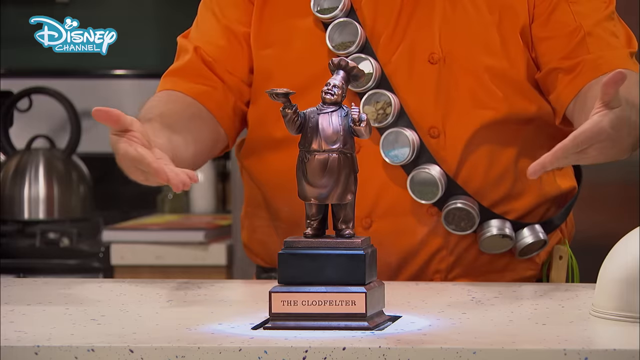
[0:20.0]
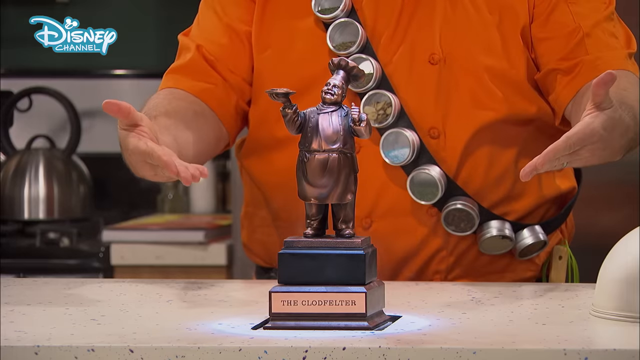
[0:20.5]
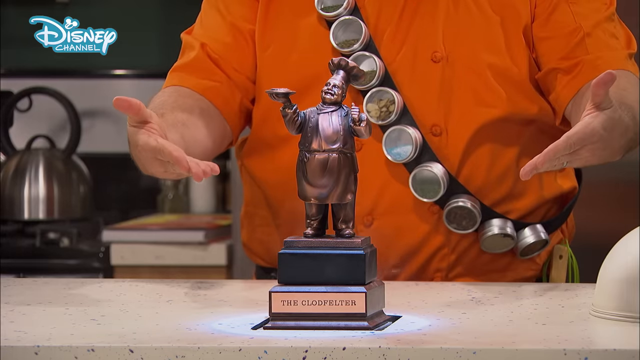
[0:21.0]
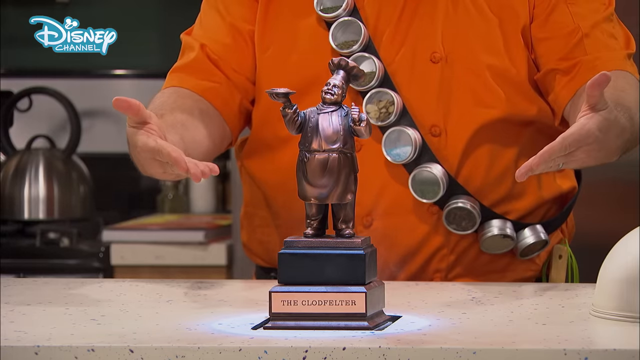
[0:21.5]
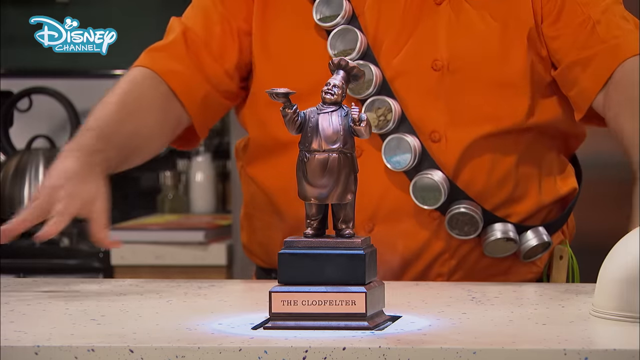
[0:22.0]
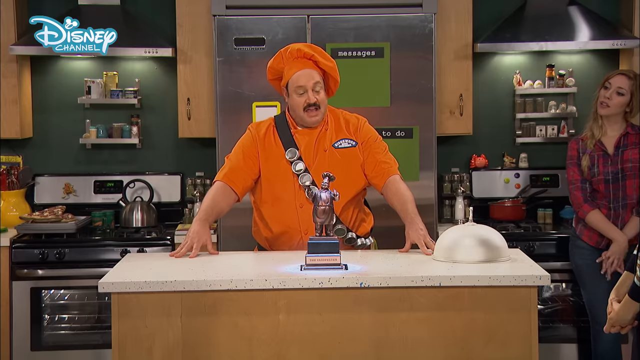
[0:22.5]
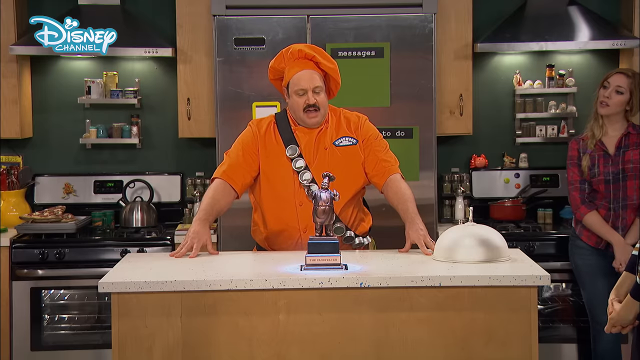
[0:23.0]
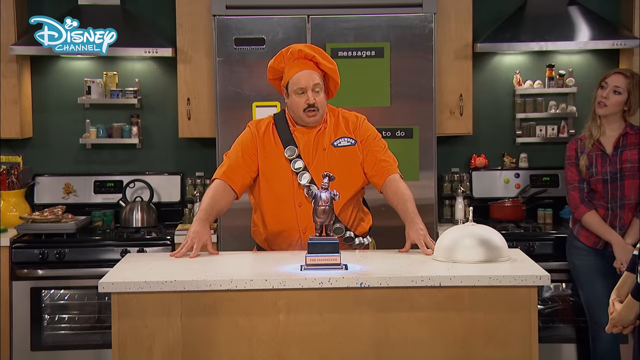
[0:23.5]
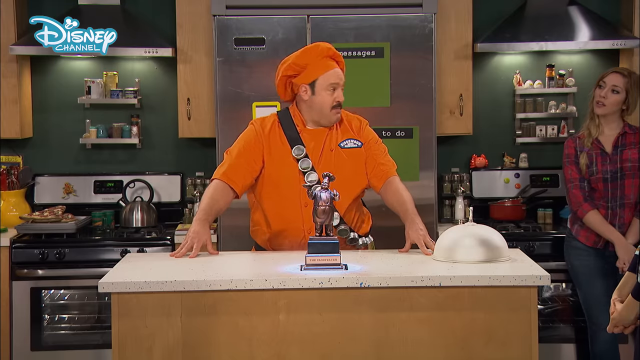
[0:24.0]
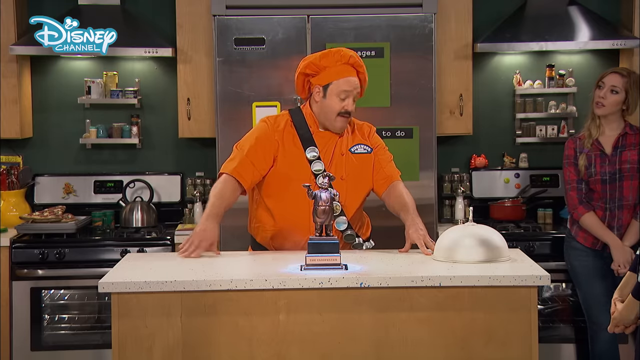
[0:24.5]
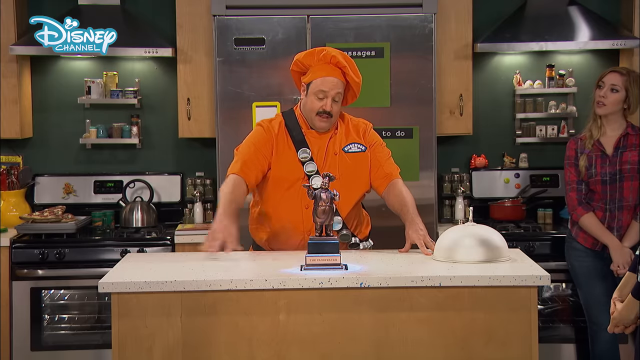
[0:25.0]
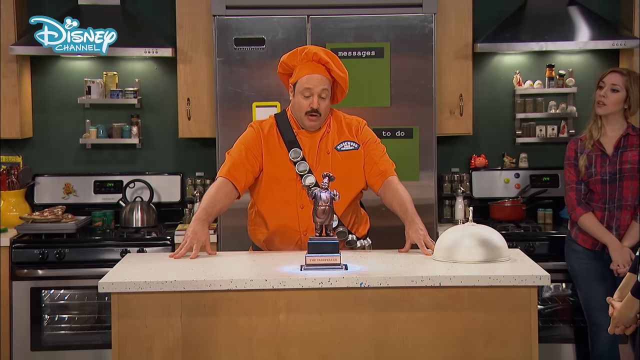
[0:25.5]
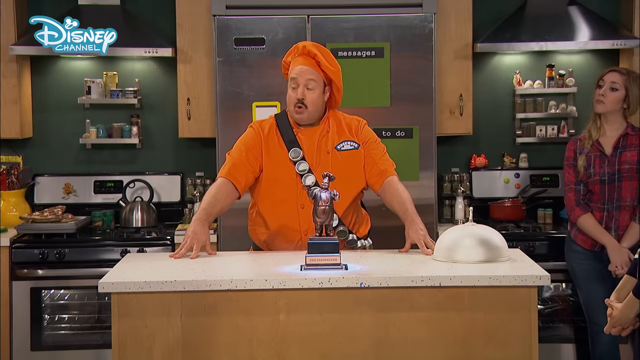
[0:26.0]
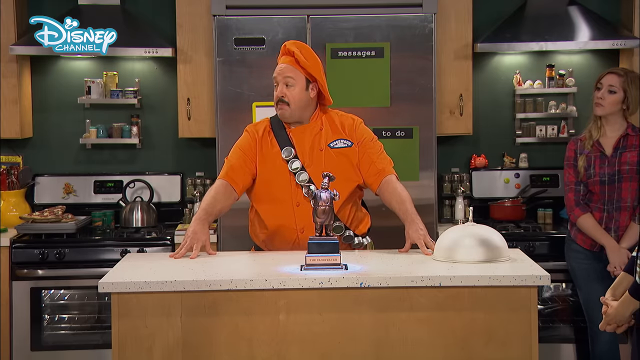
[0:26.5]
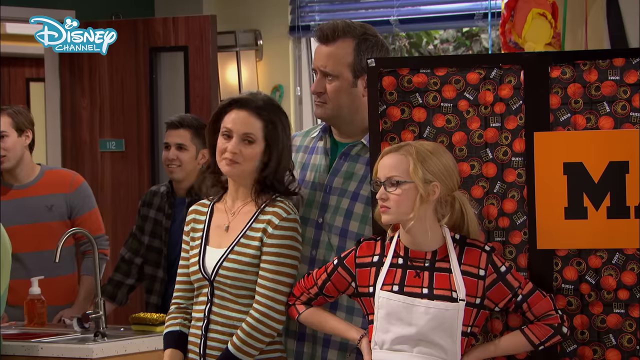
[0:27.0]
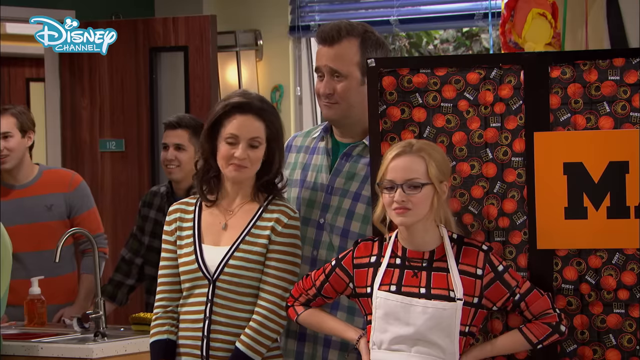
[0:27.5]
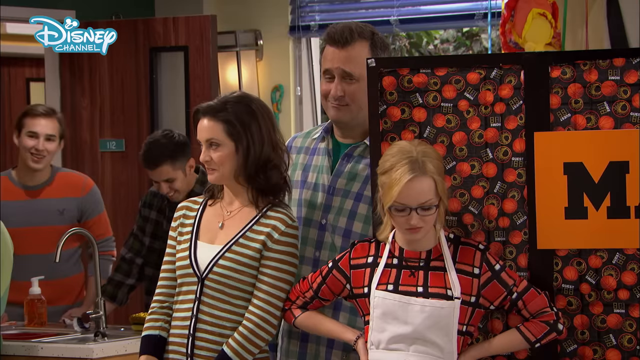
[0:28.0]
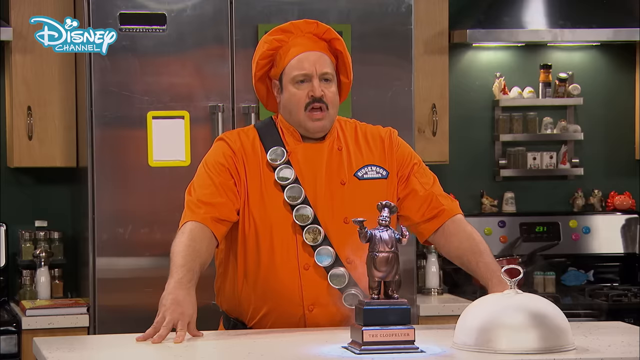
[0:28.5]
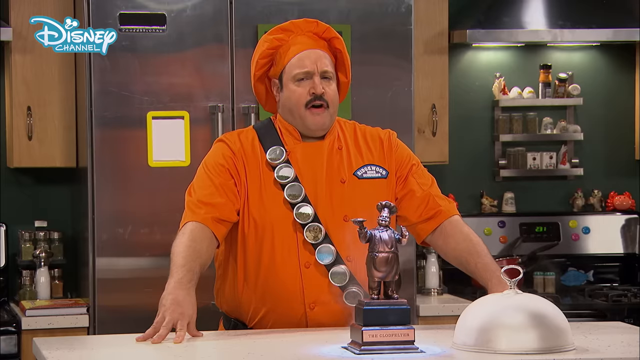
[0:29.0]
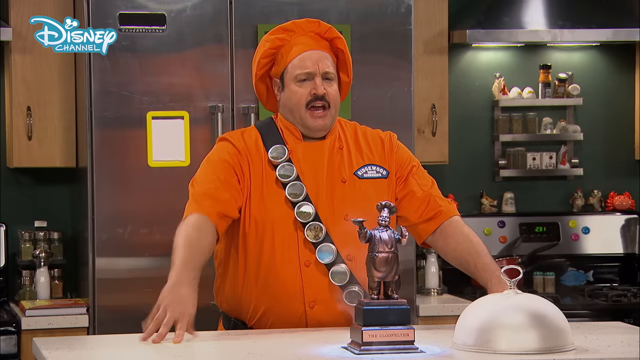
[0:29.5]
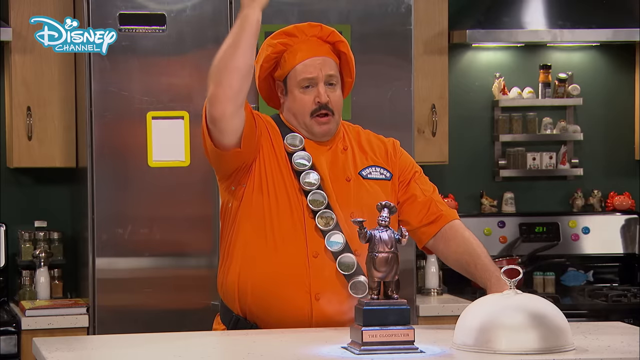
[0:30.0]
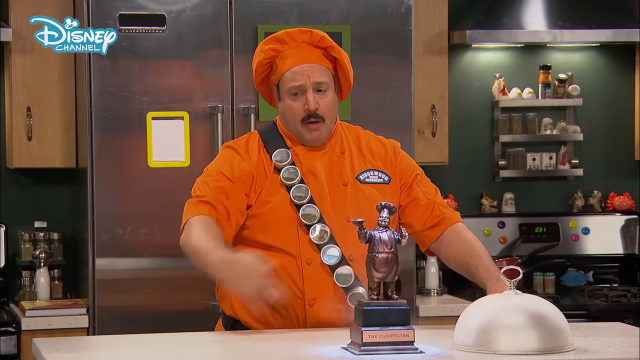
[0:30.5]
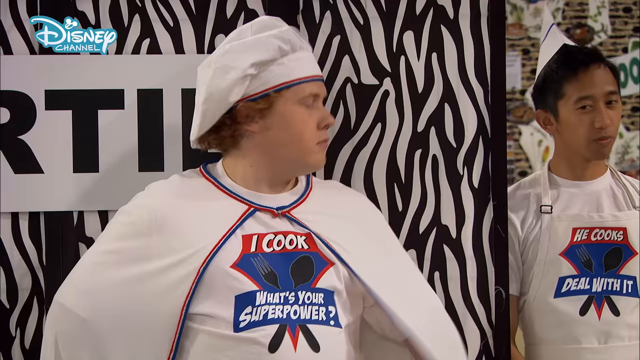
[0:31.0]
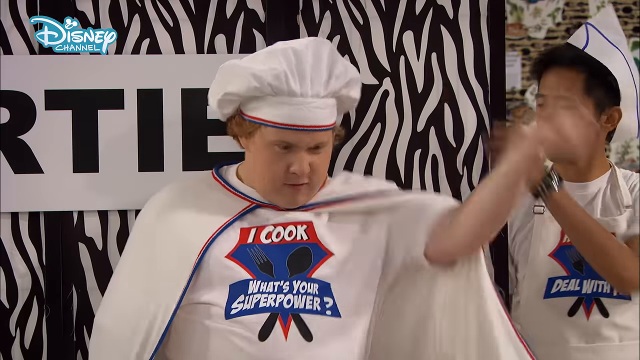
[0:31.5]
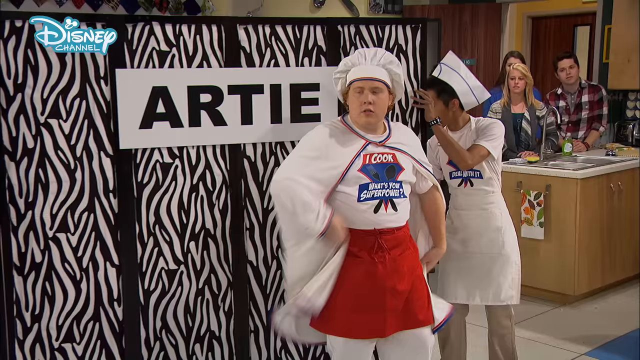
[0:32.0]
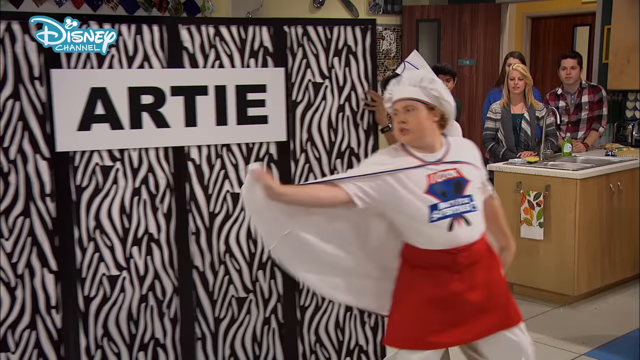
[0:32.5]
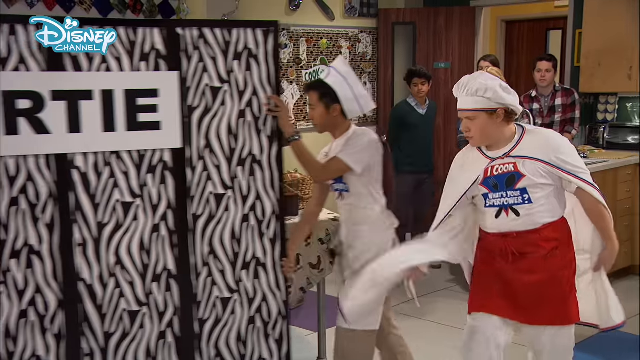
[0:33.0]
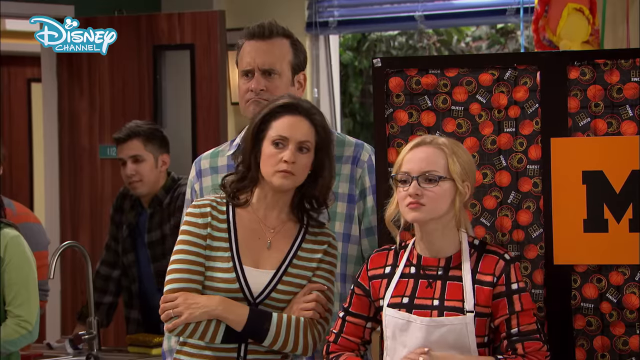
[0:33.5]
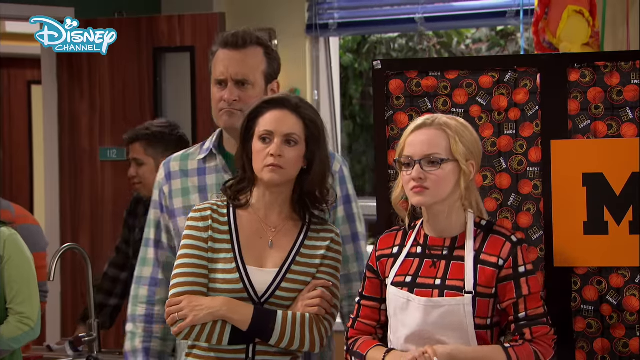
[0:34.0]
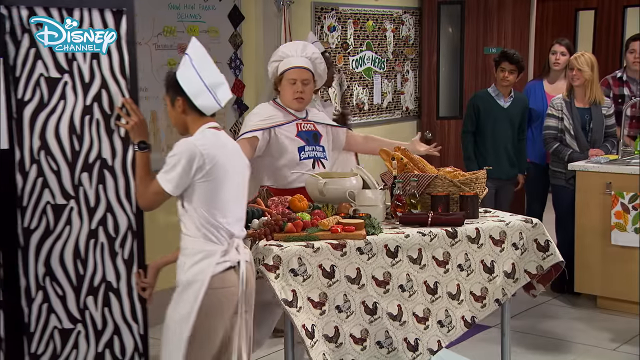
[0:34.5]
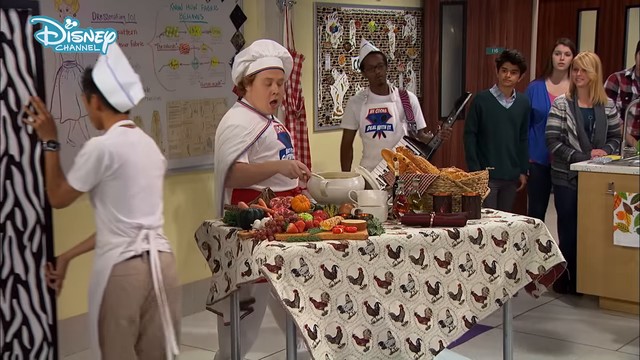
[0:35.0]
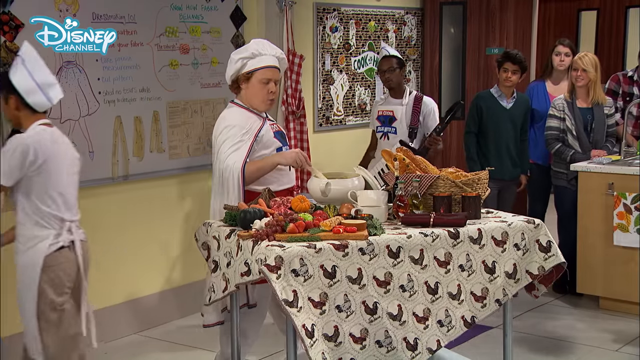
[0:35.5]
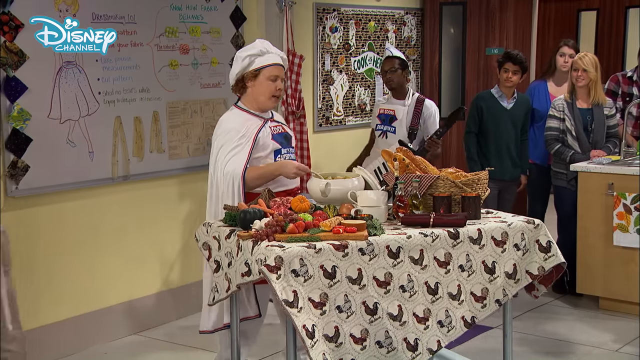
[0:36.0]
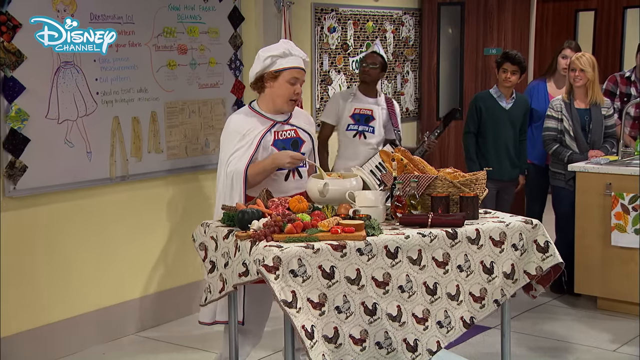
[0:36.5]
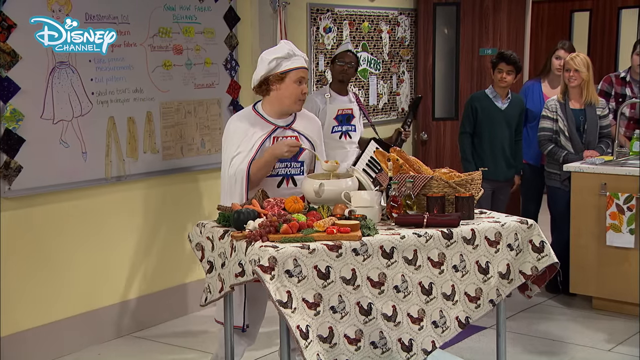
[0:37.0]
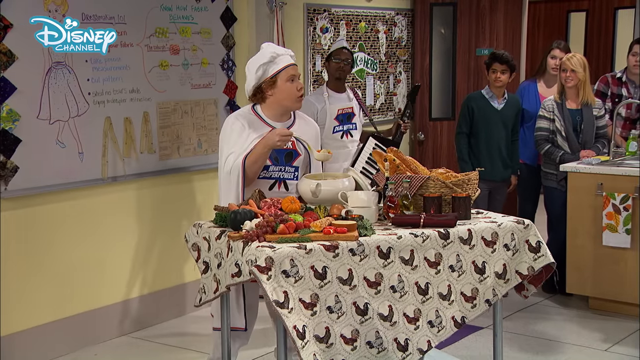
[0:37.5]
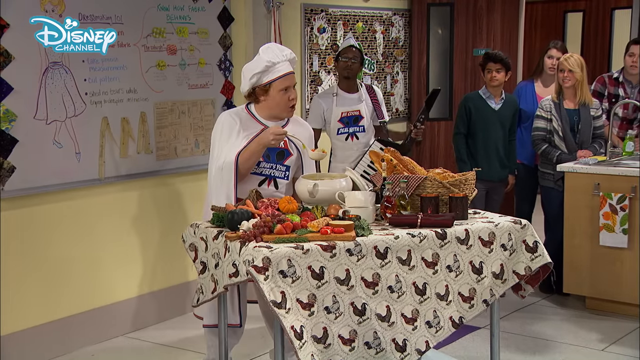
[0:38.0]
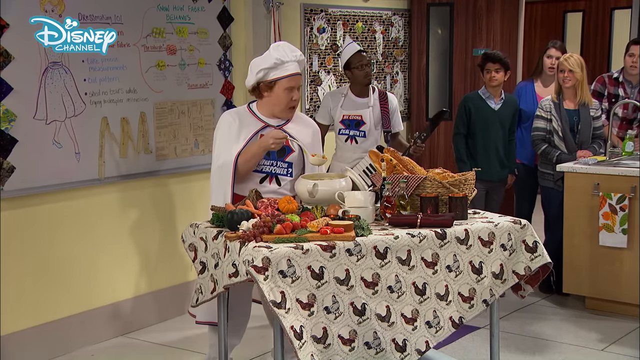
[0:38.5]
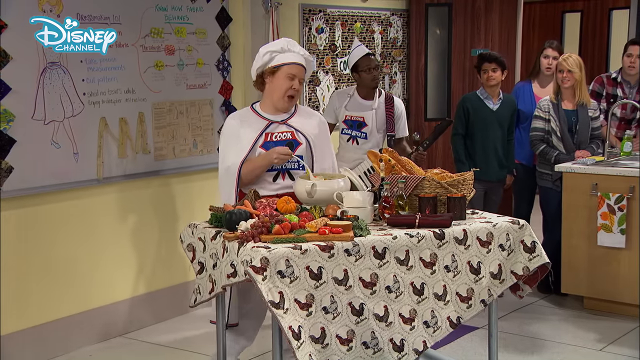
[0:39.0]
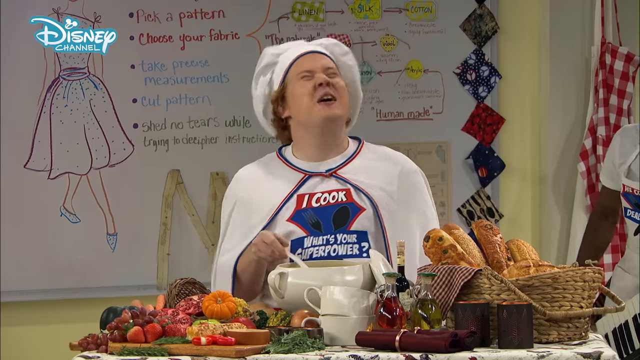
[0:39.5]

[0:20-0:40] A man in a chef's outfit points at and talks about a little statue standing in the middle of the table. It is apparently some kind of award for a cooking competition that some kids are taking part in; the award is called the Clodfelter. The statue looks bronze colored, and the man in the statue holds up a plate in one hand and wears a chef's hat and a chef's apron. The man behind him in the orange cooking outfit has a belt of some kind going around one shoulder, with what look like little things inside it, maybe little containers with herbs. Behind him there are some books, a stove and what looks like a teapot. One of the boys in the competition wears a white chef's apron and a white chef's hat.